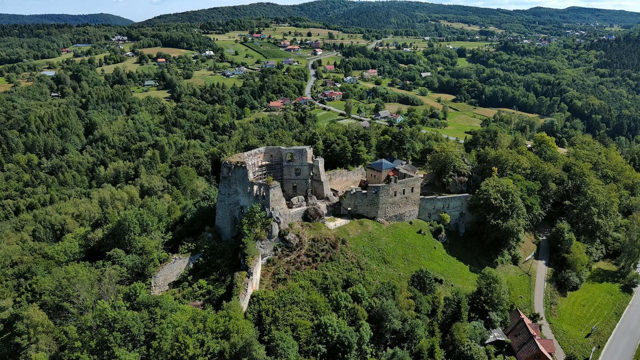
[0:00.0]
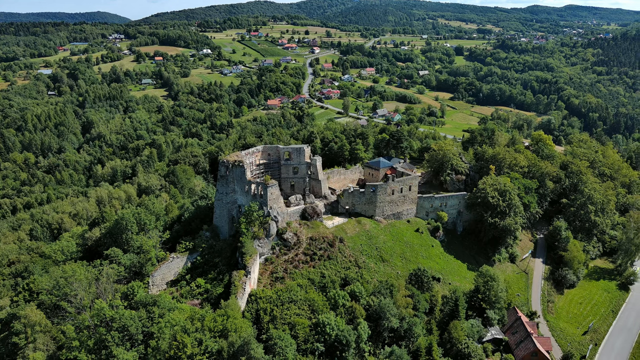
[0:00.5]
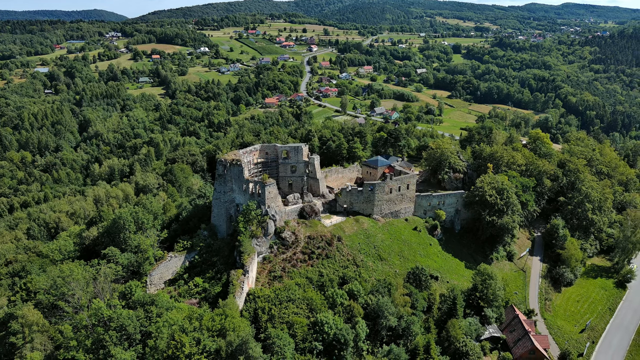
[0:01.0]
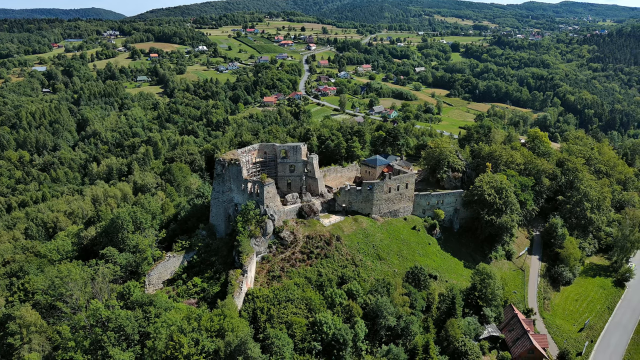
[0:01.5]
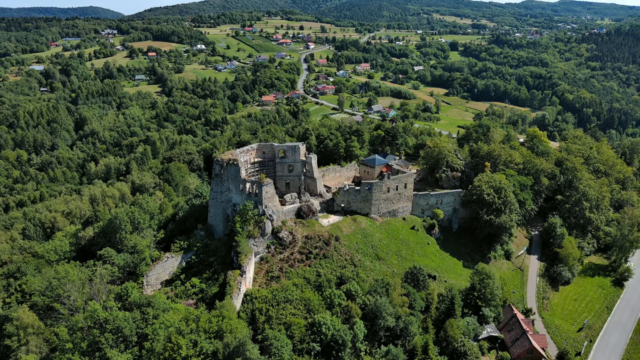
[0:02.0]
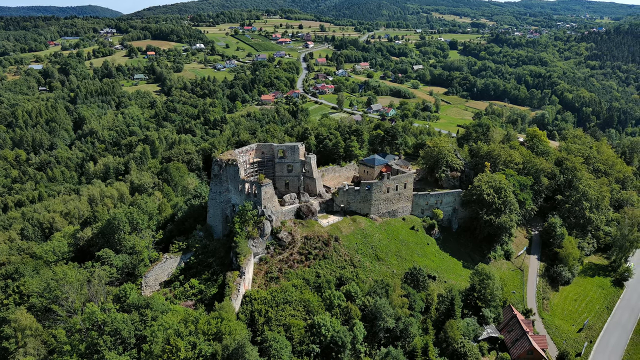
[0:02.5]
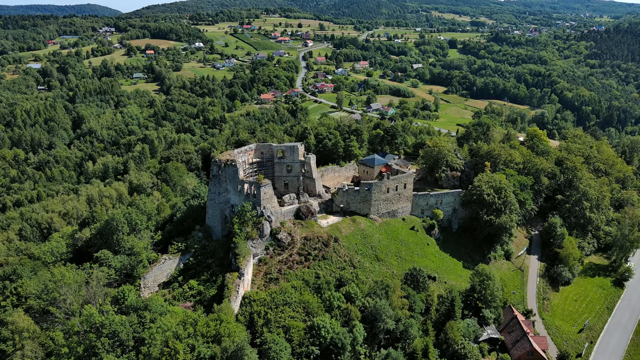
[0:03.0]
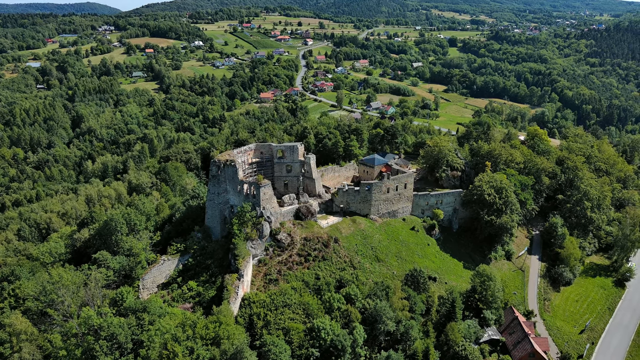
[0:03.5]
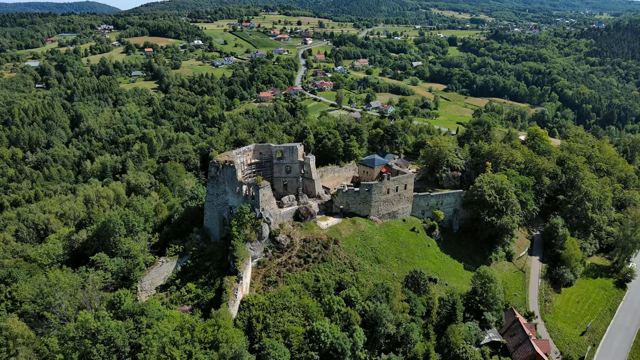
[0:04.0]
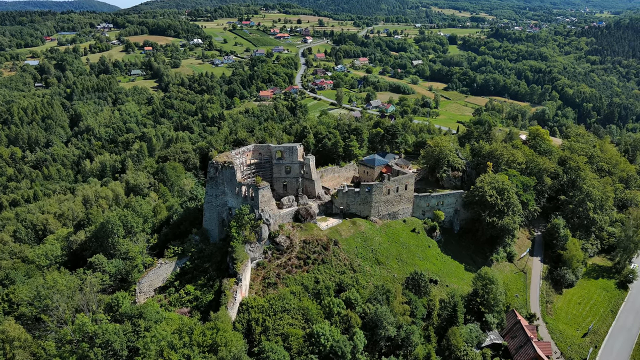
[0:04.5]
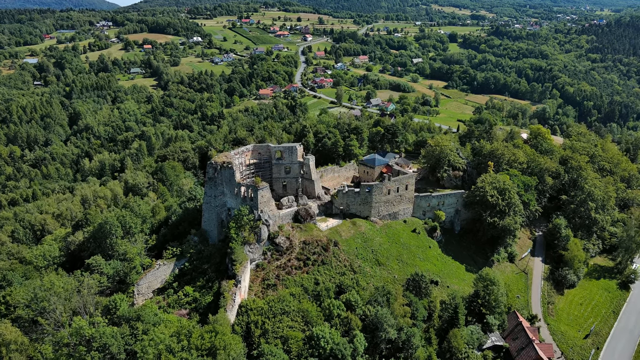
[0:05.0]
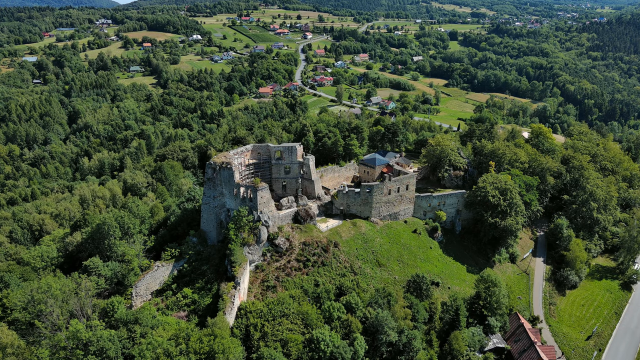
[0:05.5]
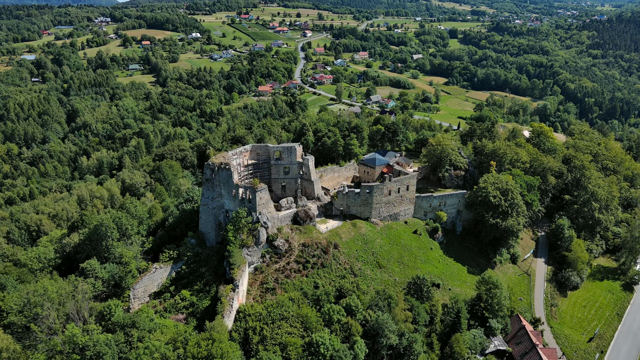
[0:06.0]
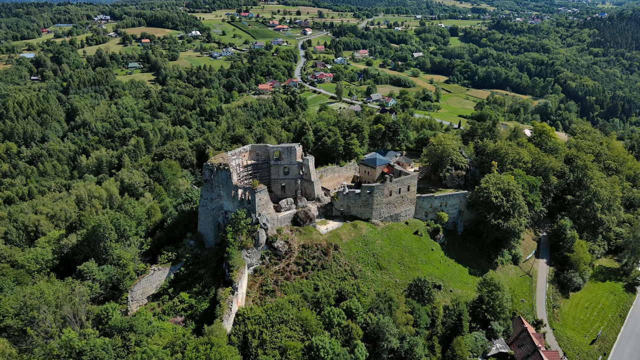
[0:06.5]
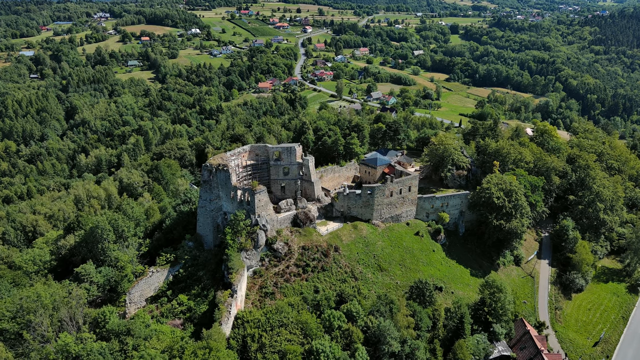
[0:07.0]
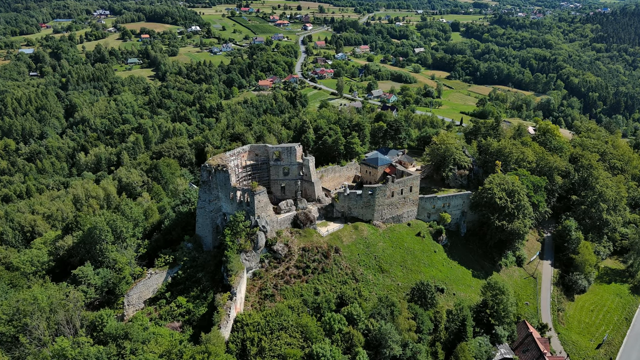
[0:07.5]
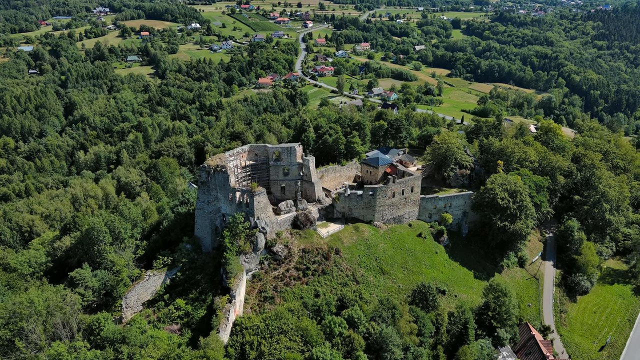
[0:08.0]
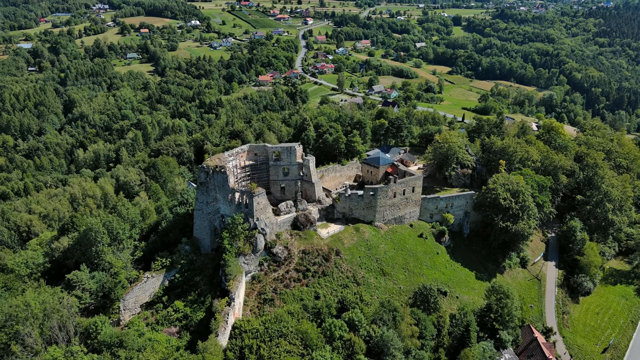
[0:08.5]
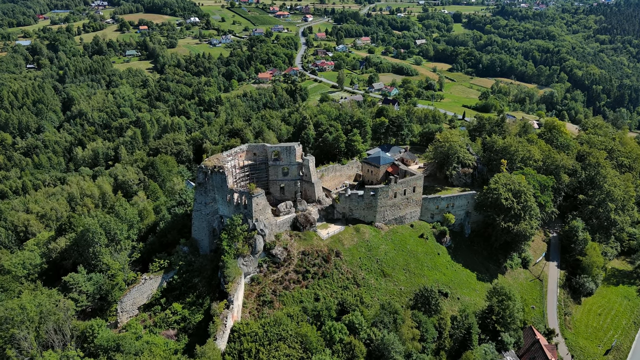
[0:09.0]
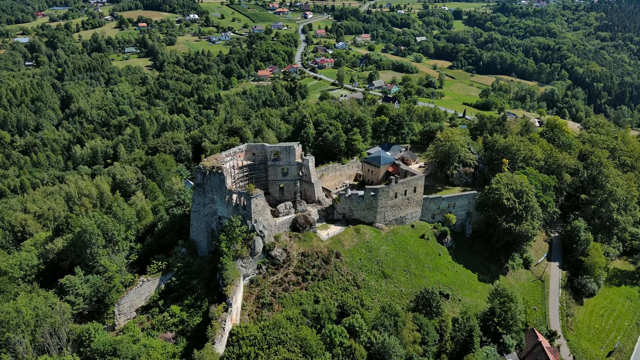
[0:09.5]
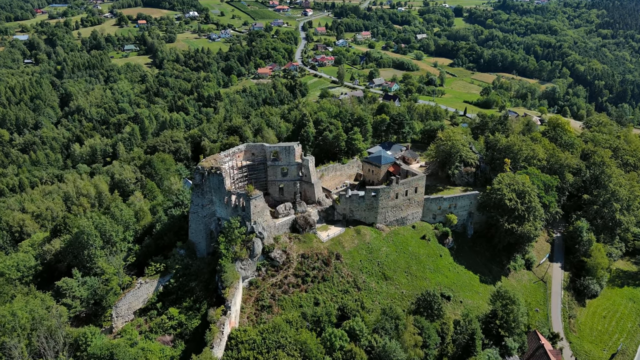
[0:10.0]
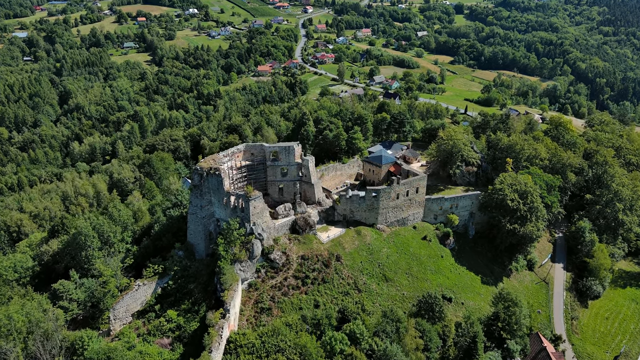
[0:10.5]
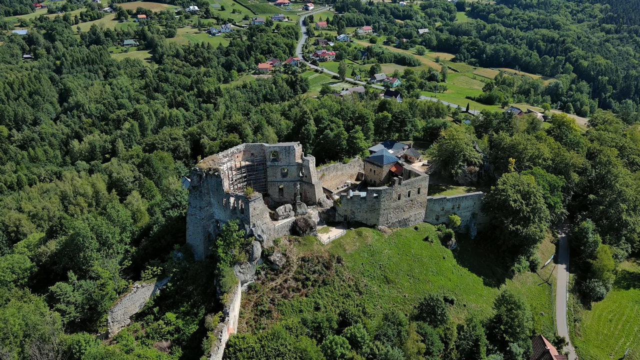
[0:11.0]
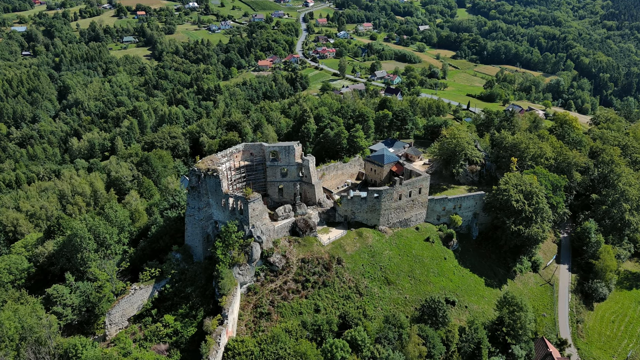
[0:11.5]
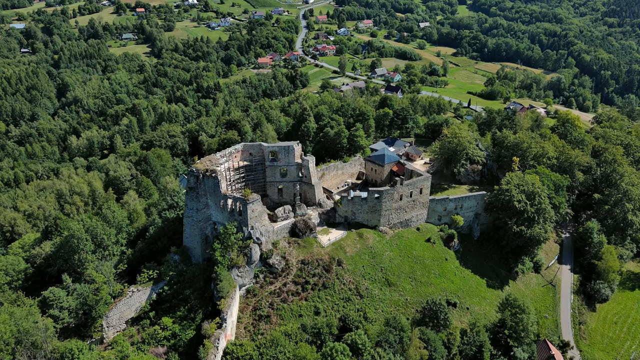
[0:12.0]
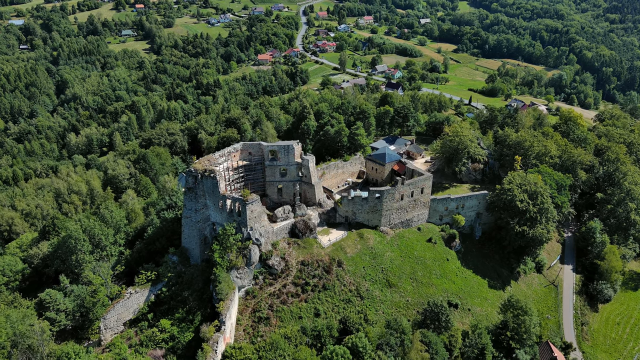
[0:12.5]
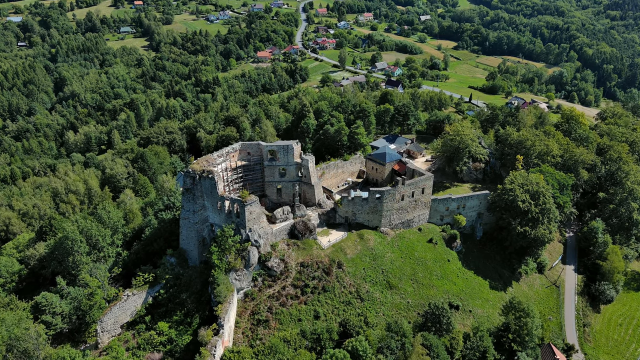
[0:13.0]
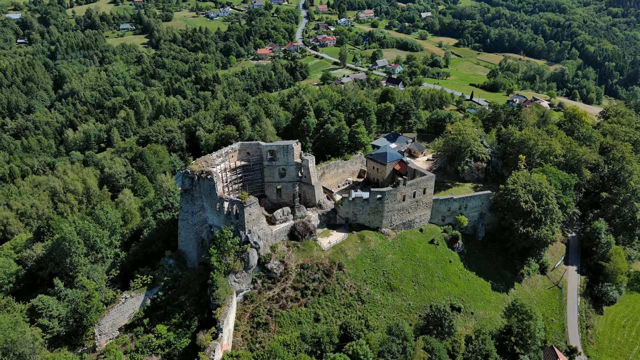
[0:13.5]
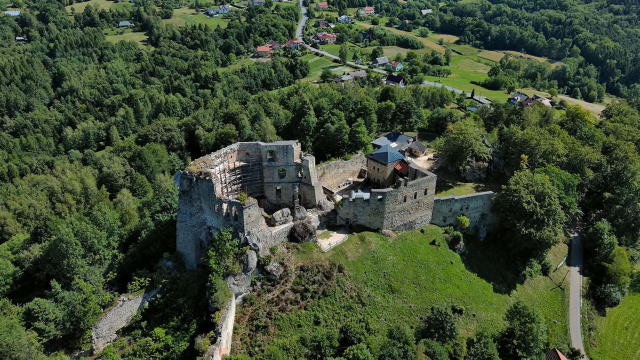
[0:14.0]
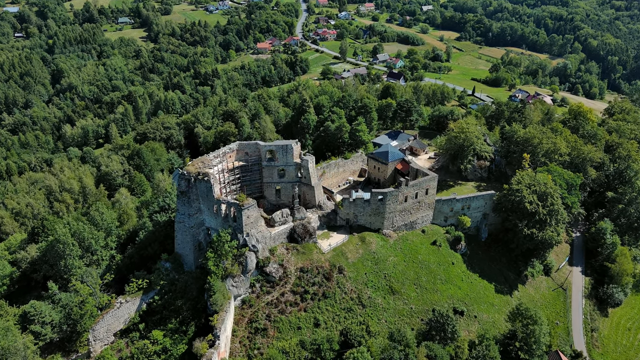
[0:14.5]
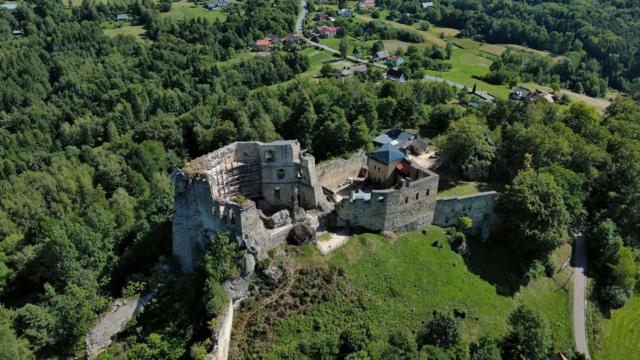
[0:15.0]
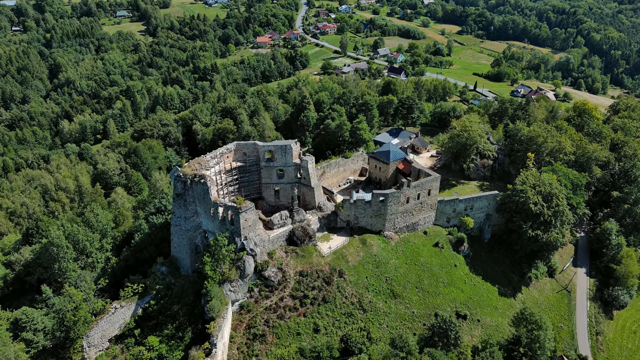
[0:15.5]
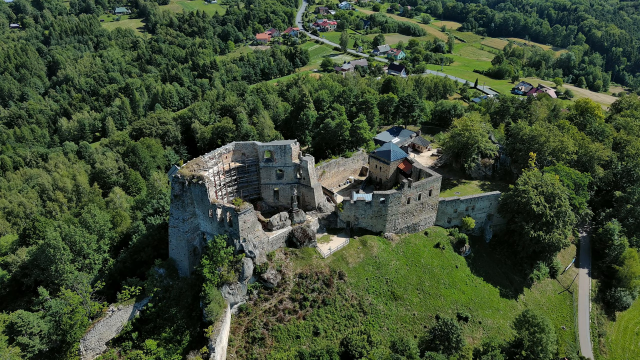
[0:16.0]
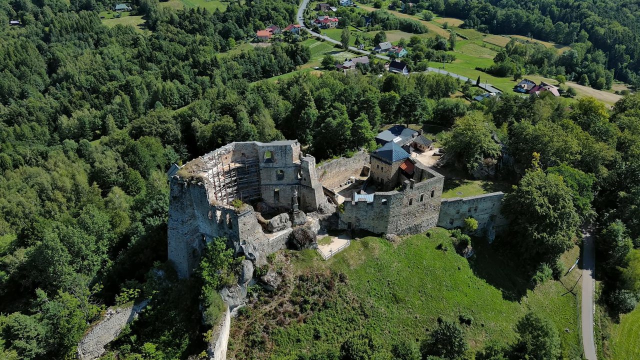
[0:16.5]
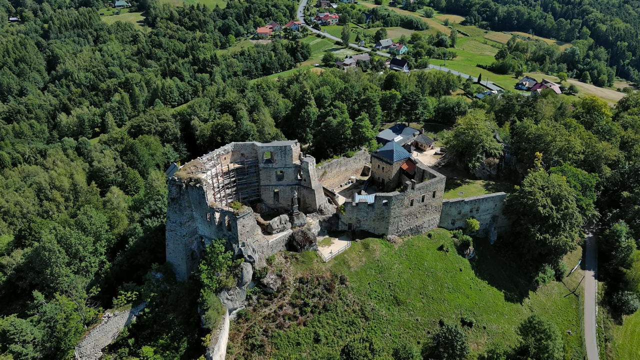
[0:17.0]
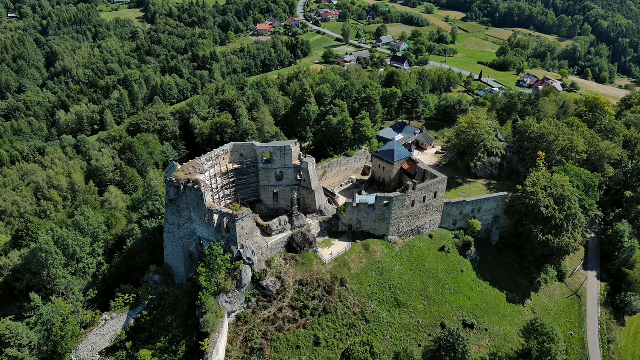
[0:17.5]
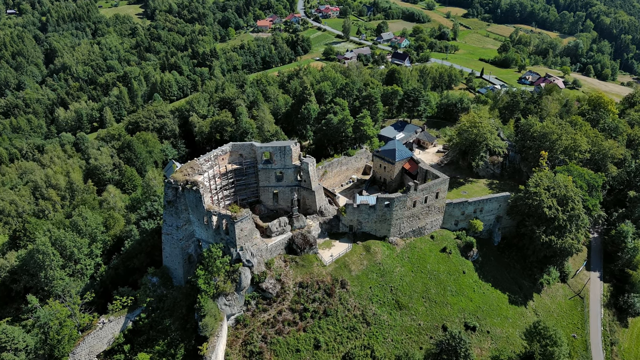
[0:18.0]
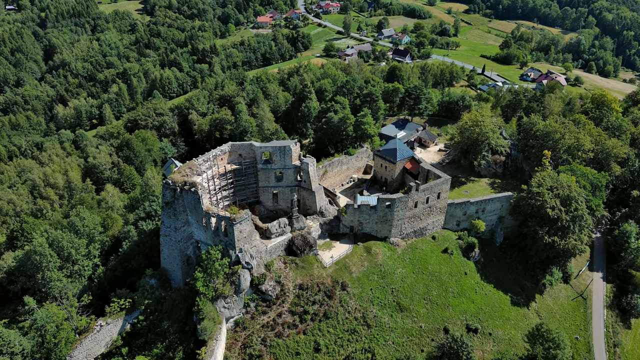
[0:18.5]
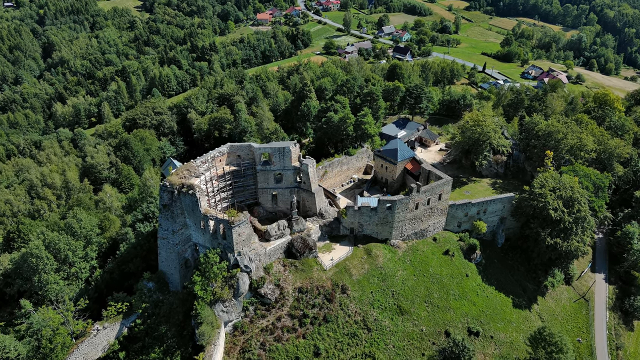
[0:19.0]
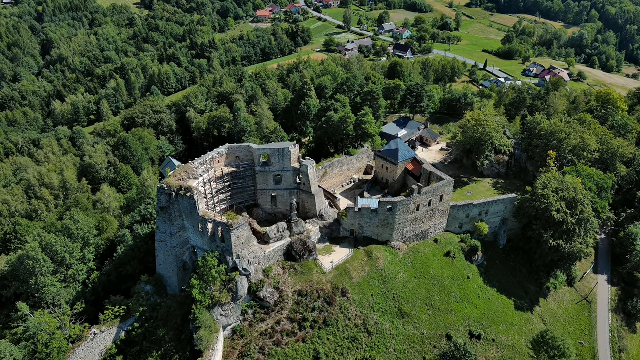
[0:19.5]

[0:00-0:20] An aerial view opens on a historic-looking area with trees on a hill. A partially complete structure of stone and bricks comes into view; it looks extremely old, perhaps a castle or maybe a fort, and is probably 30 to 50 feet tall. As the camera gets closer, more details of the structure become visible.